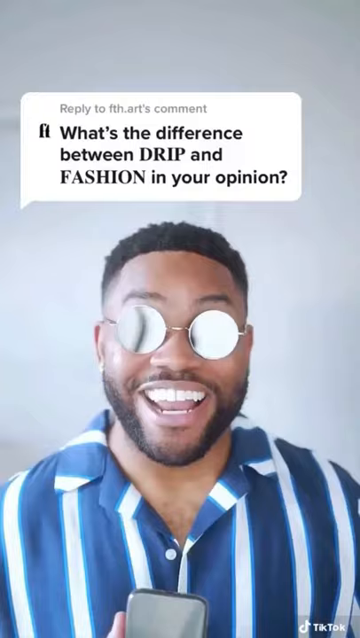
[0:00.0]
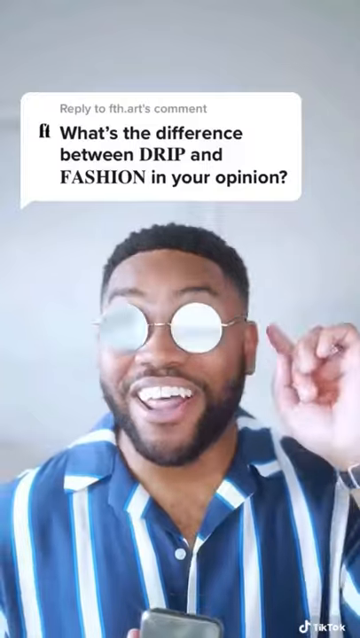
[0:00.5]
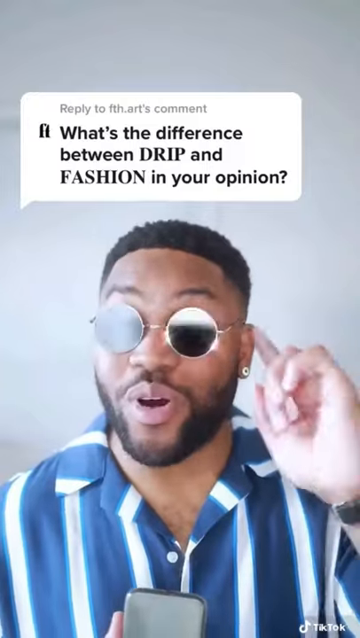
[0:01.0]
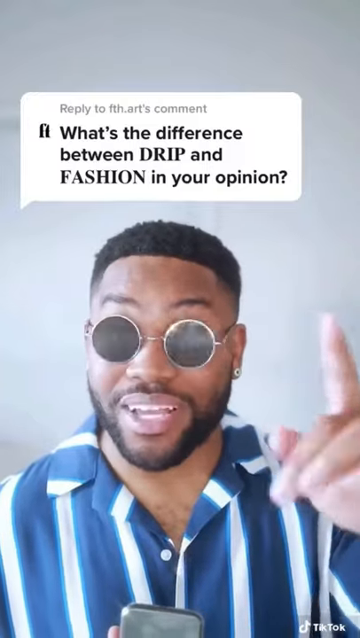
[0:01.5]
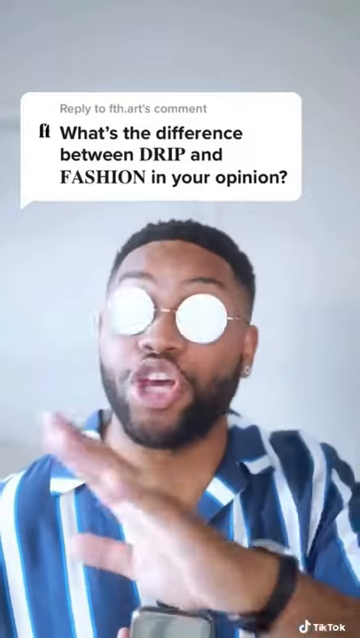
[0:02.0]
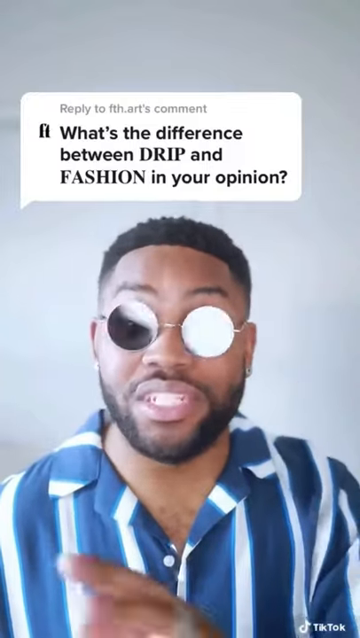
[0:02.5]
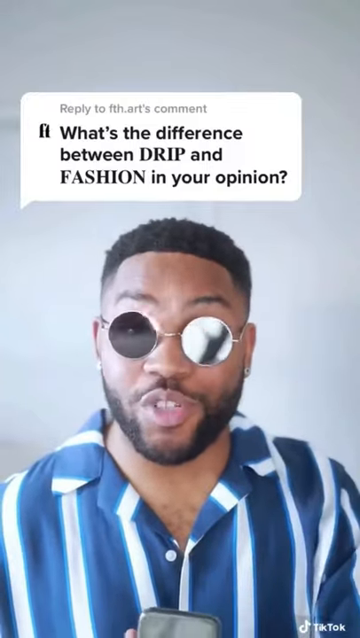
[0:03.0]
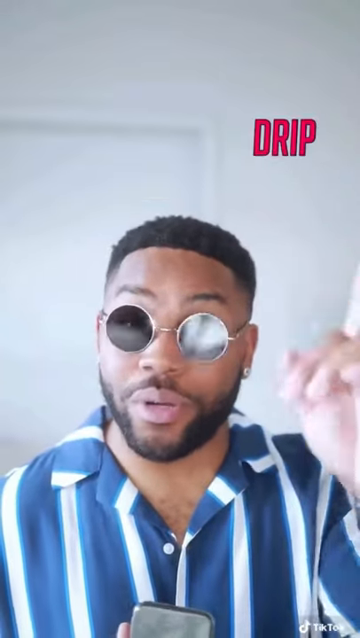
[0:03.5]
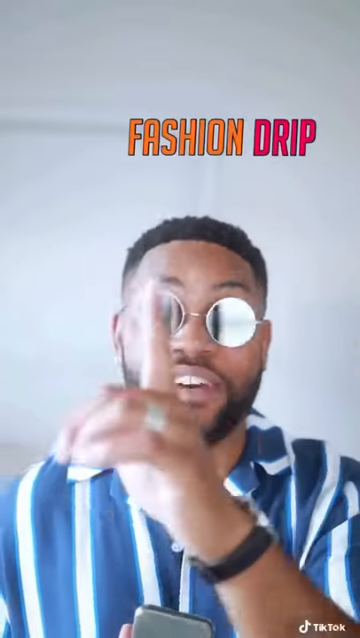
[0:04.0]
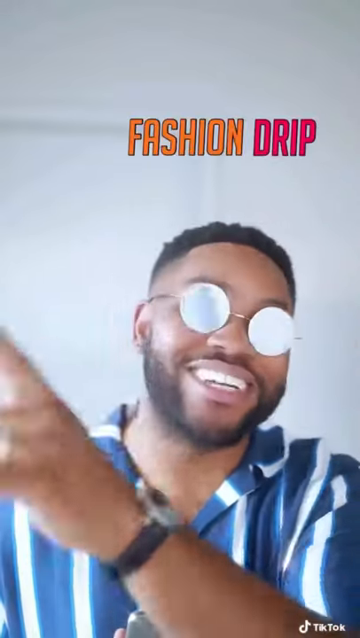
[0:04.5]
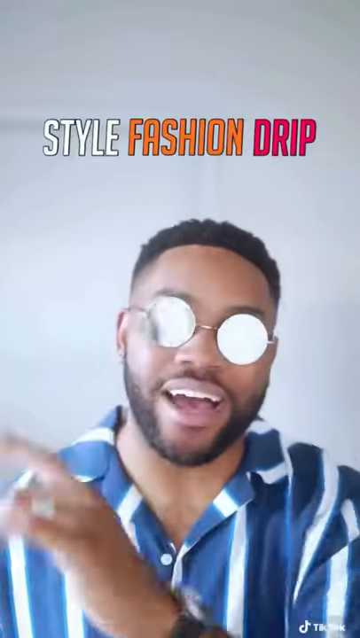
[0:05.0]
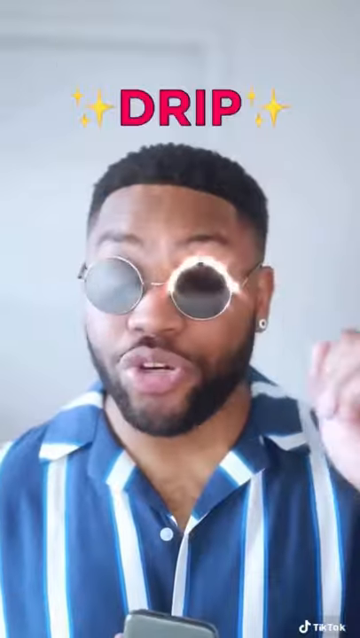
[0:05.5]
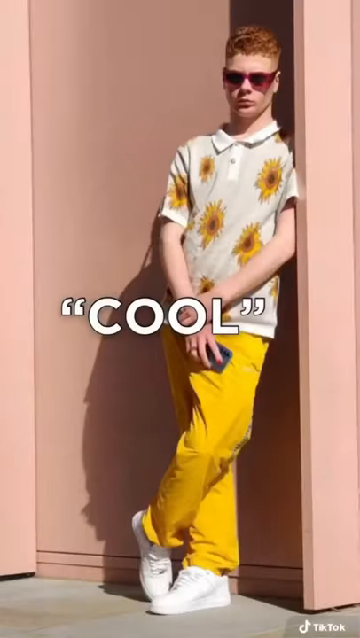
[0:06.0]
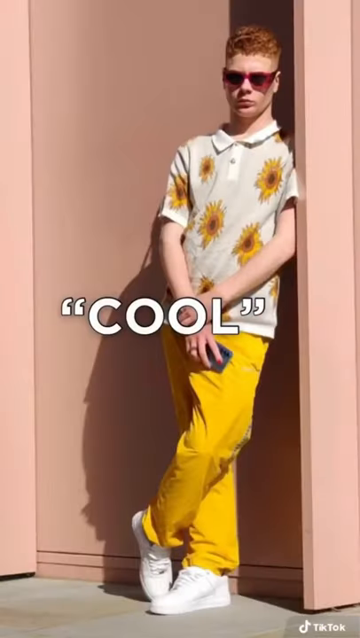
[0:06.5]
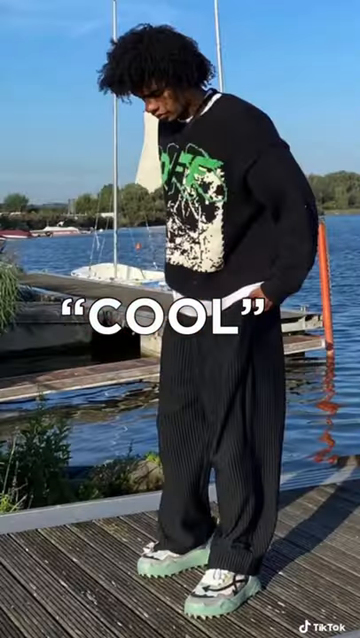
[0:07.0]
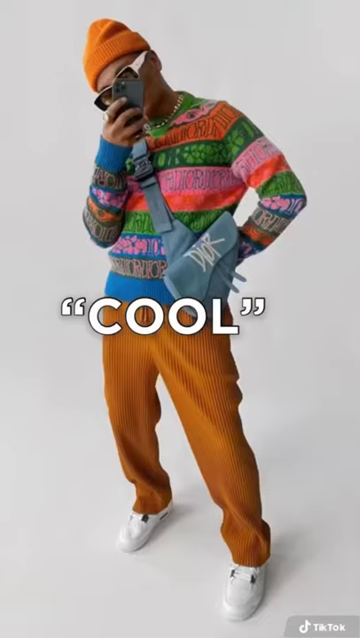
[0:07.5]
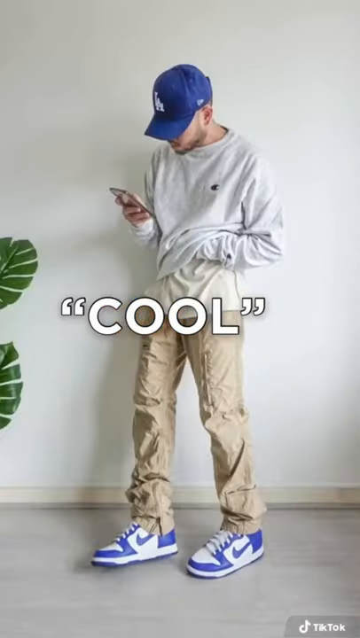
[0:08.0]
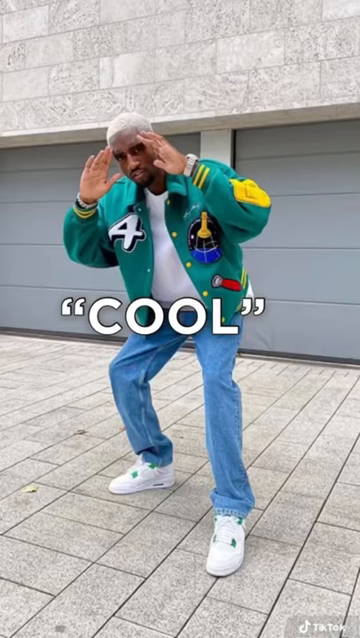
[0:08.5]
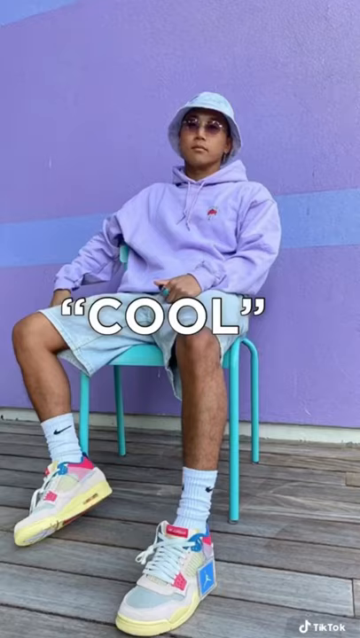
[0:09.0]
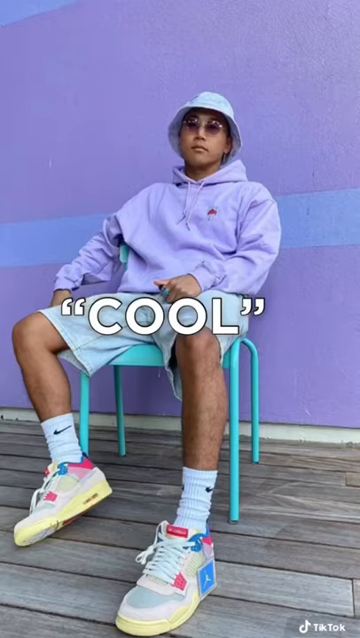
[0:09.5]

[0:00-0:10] A man who looks to be in his 30s speaks to the camera. He wears a striped blue and white shirt that looks like a summer shirt, with the top button unbuttoned, along with sunglasses and a stud in his ears. Text on top of him reads "reply to FTH arts comment", and the comment says "what's the difference between DRIP and fashion in your opinion", with the words "DRIP" and "FASHION" in capital letters. He looks like he is talking about the comment. The title then shows the words "style", "fashion" and "drip": style is in white, fashion is in orange and drip is in red. Next the word "cool" appears, with various people visible behind it. One image shows a man who looks like a teenager wearing a white golf t-shirt with sunflowers on it, white and yellow trousers, white sneakers and sunglasses. Behind the word "cool" another teenager with an afro appears, wearing black, then an image of a man holding his phone and wearing a beanie, followed by various other photos popping up on the screen.